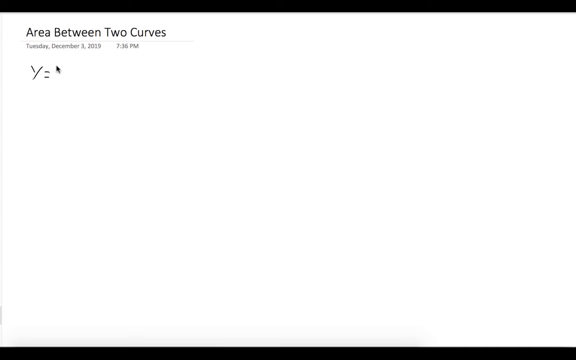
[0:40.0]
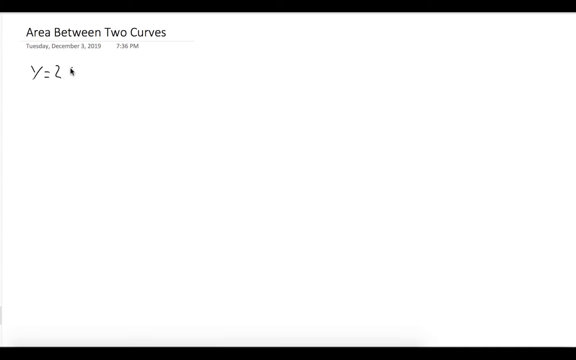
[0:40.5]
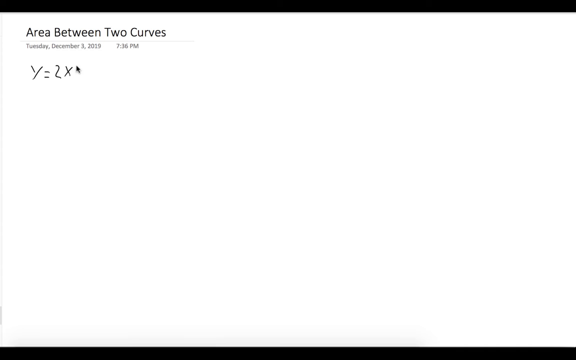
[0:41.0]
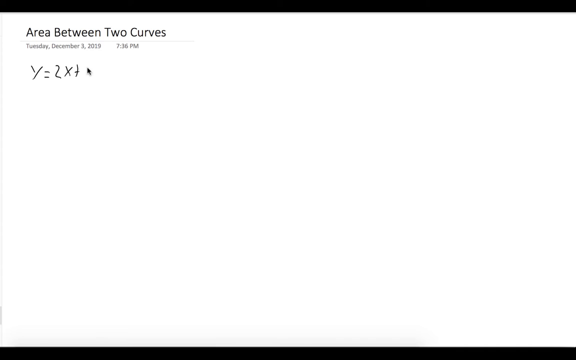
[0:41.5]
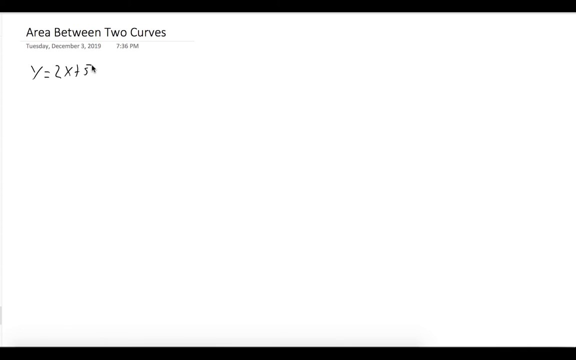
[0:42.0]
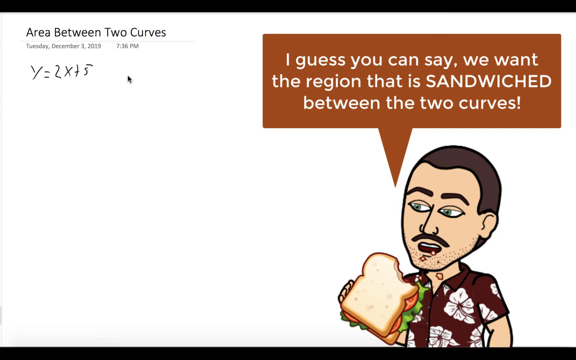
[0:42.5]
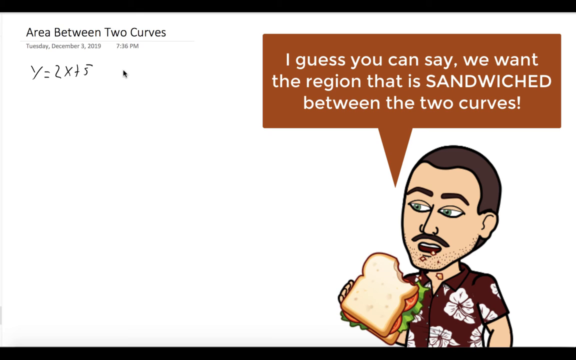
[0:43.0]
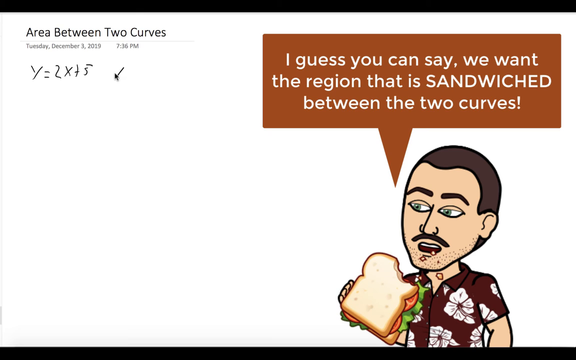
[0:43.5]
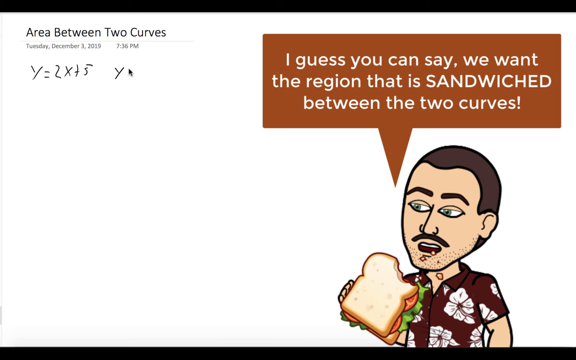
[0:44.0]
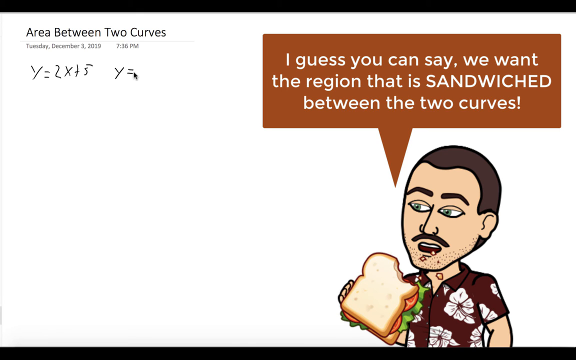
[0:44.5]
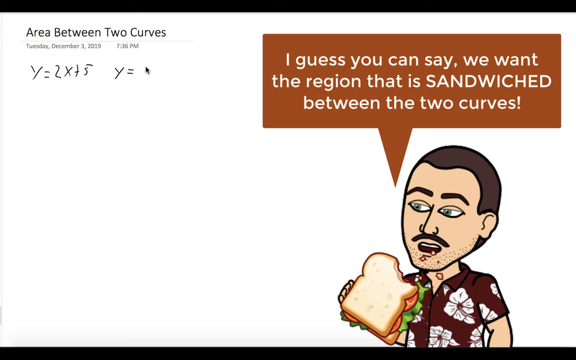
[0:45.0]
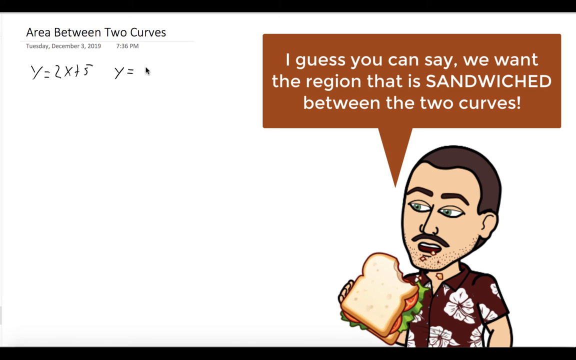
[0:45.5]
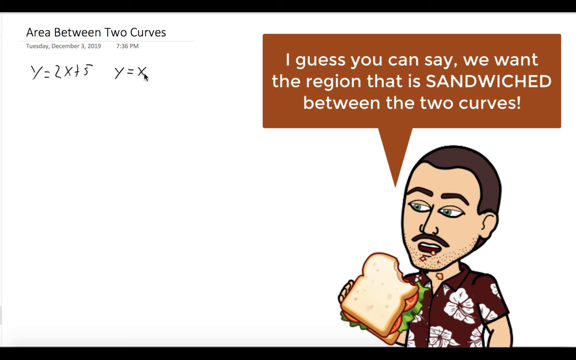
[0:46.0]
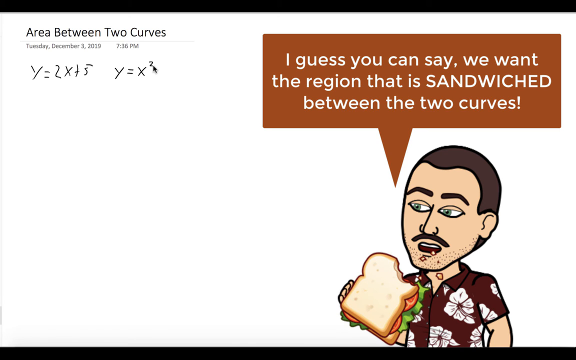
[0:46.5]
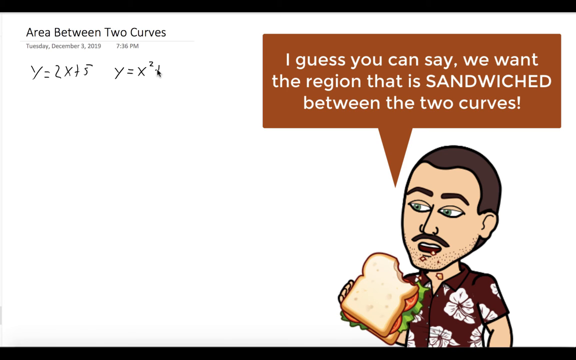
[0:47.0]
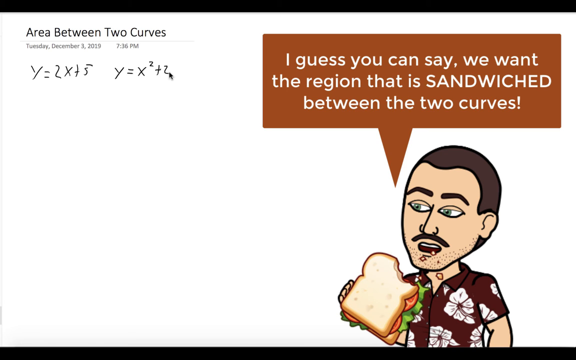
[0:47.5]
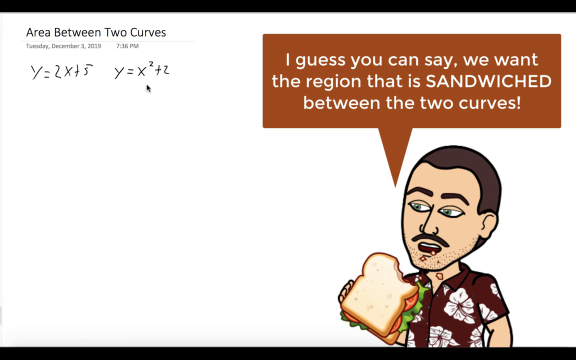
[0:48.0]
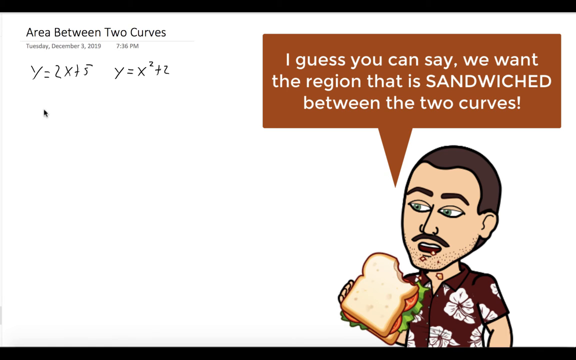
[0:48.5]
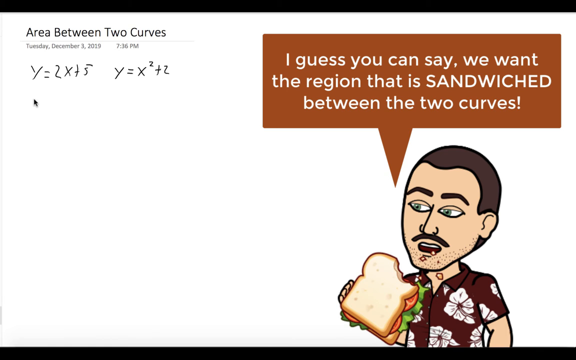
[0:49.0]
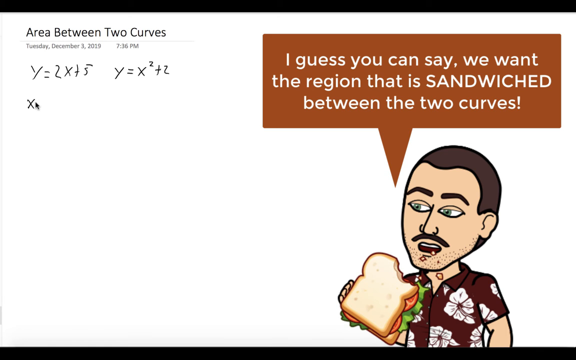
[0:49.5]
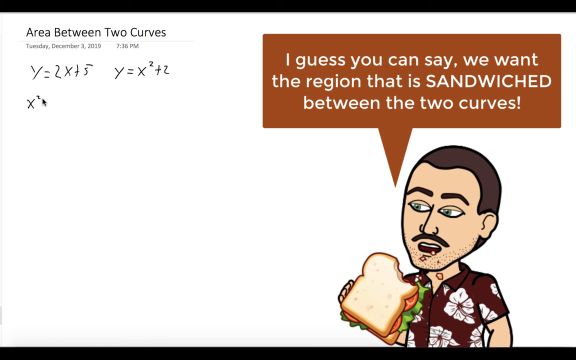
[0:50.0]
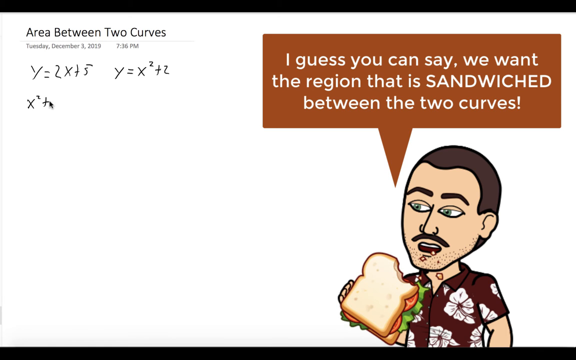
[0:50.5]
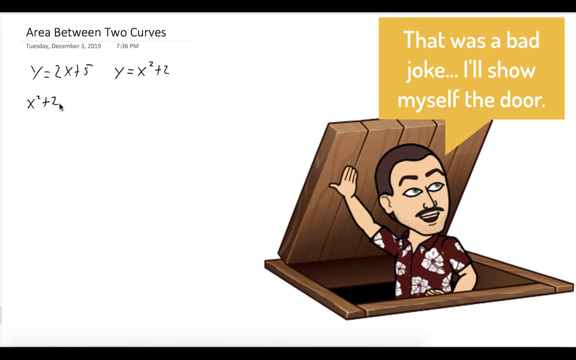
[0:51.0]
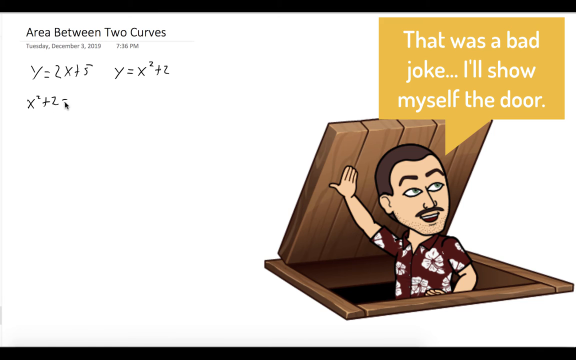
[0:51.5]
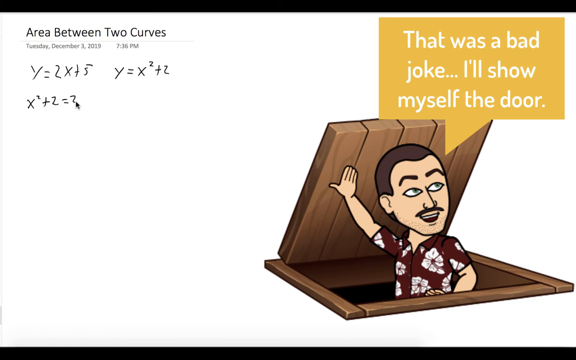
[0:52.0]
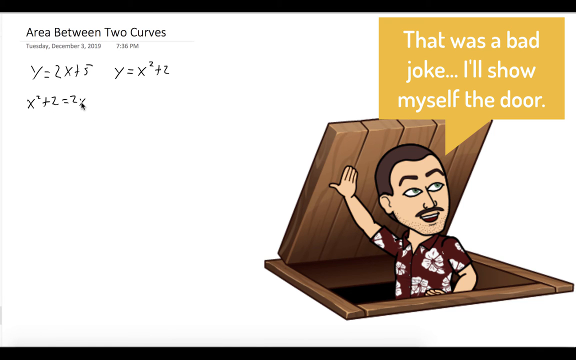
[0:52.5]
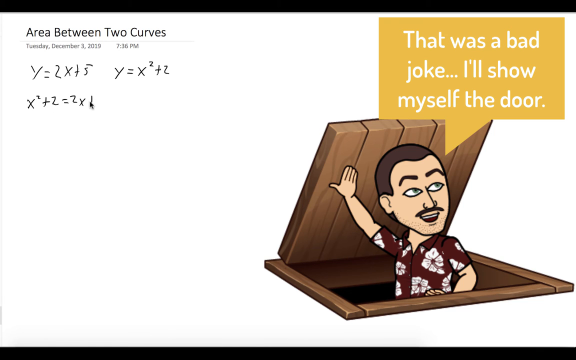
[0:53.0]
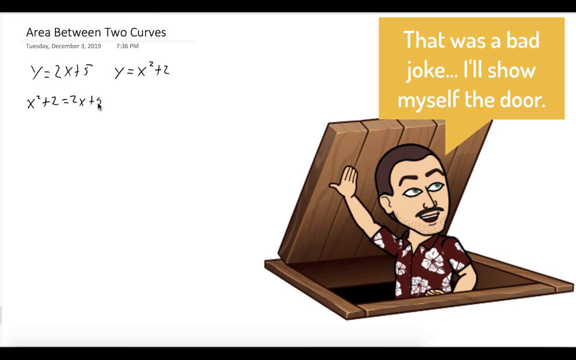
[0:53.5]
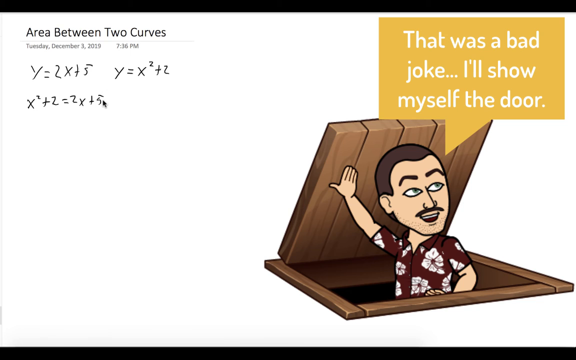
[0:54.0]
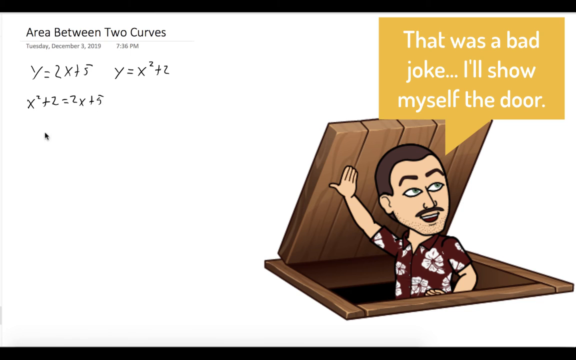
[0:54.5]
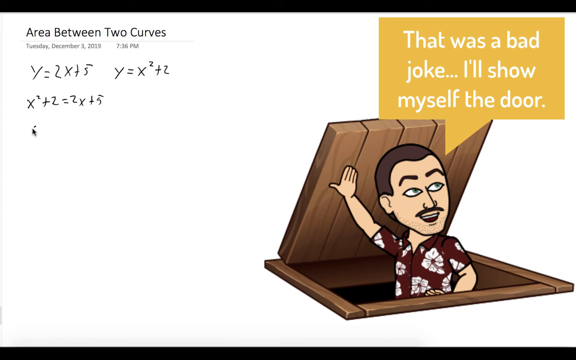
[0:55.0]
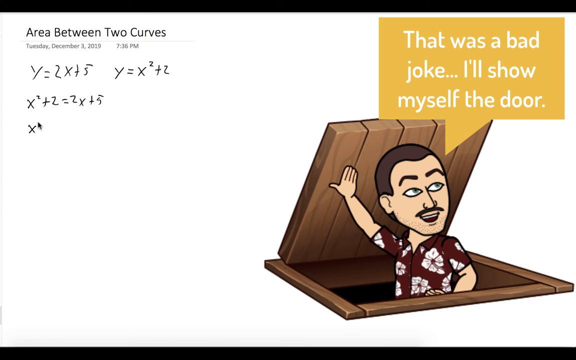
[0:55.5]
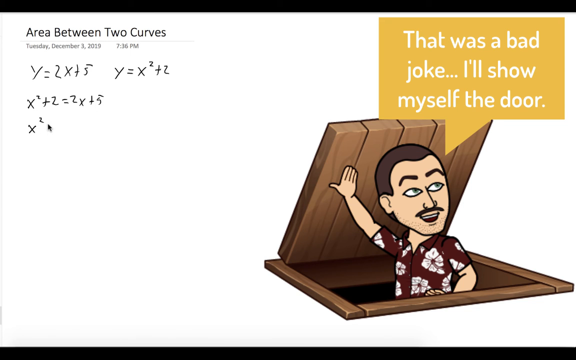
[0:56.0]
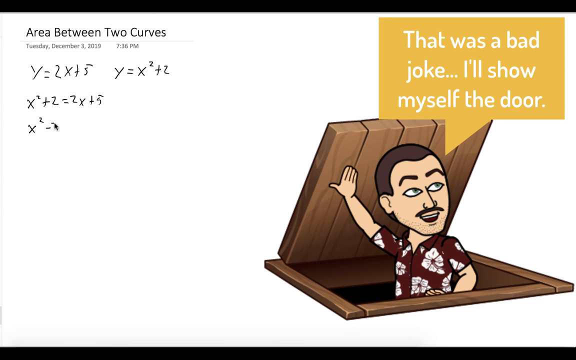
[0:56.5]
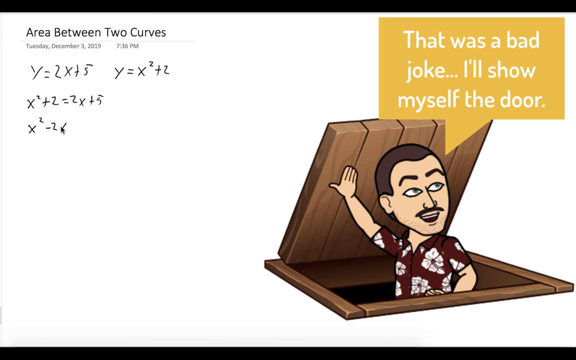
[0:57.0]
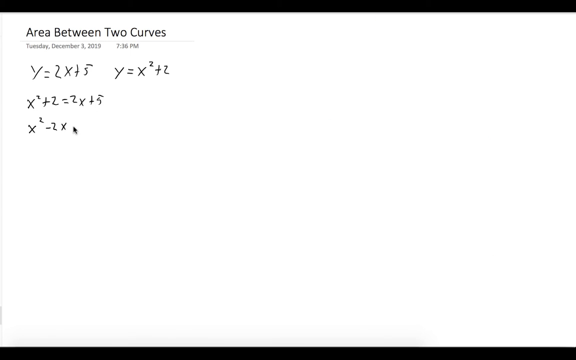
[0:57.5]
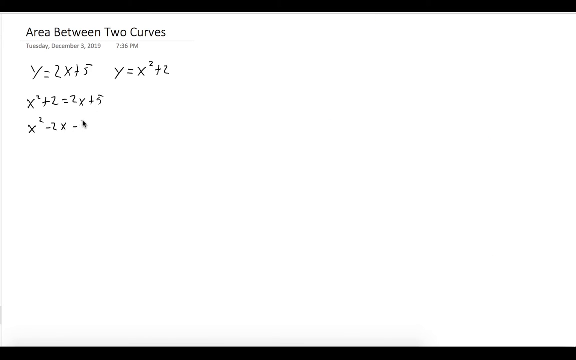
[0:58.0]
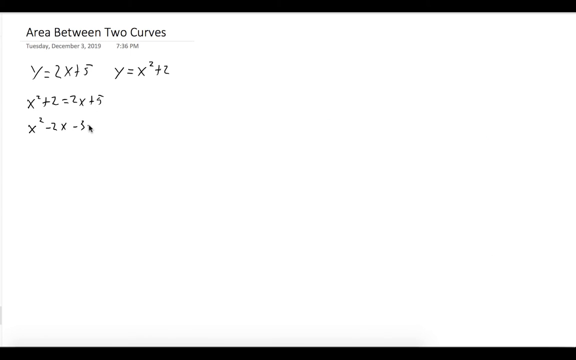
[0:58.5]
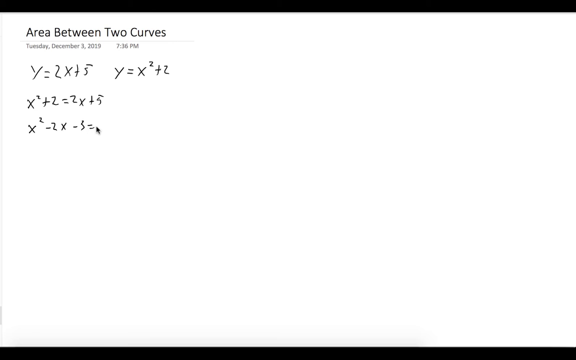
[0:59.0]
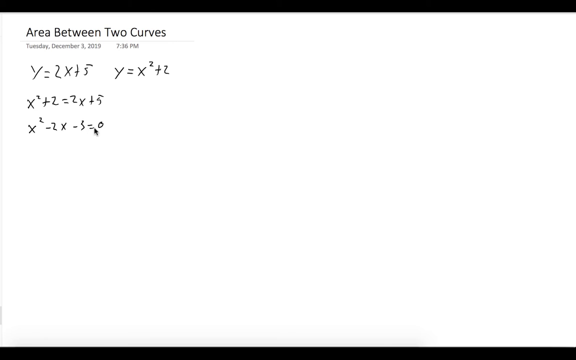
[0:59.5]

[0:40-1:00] Dr. Whistlecouch works through the problem. First, the Snapchat character, eating a sandwich, says "I guess you can say we want the region that is sandwiched between two curves." The work shows "area between two curves," with y = 2x + 5 and y = x² + 2, and then the two set equal to each other. On the right, the Snapchat character says "that was a bad joke I'll show myself the door." The work then moves on to x² − 2x − 5 = 0.